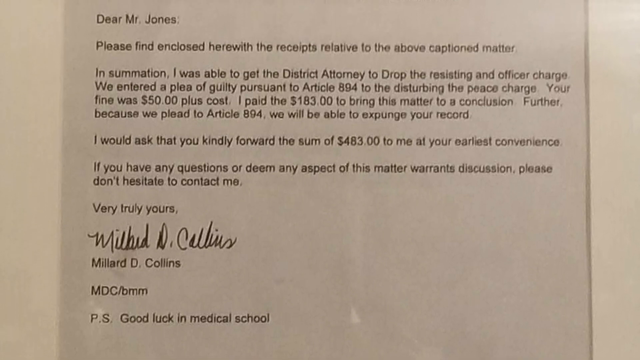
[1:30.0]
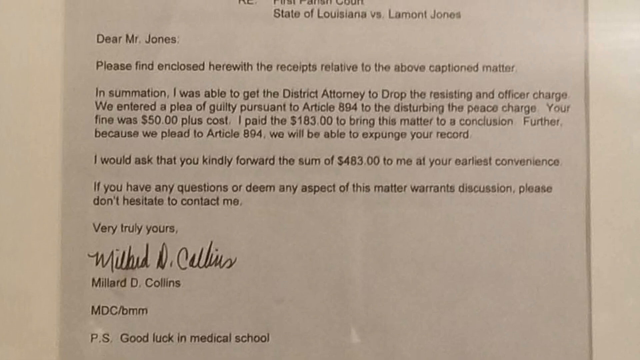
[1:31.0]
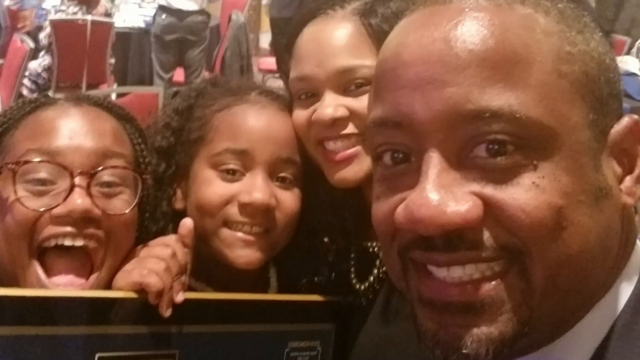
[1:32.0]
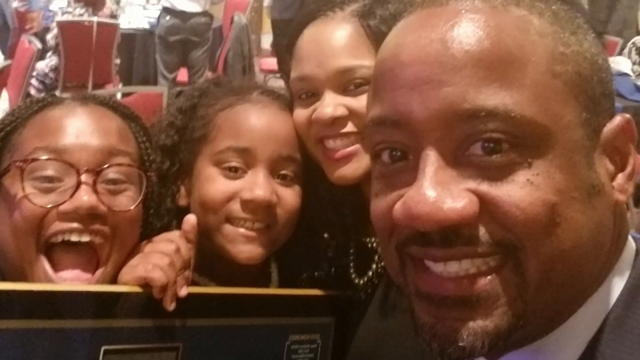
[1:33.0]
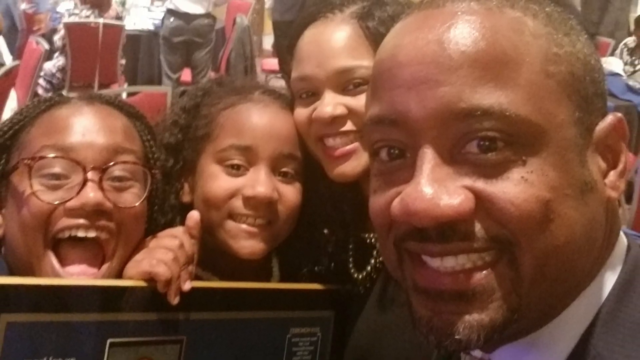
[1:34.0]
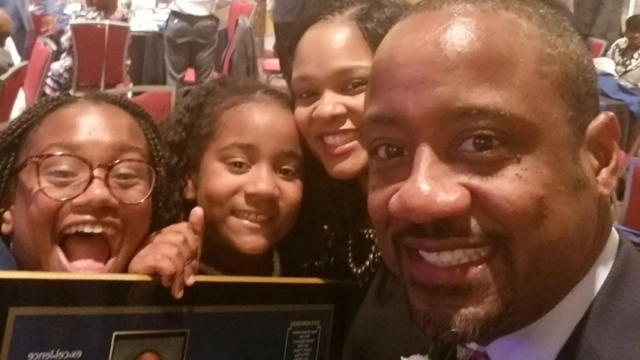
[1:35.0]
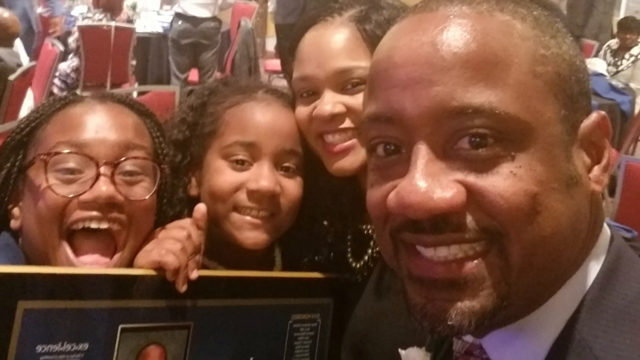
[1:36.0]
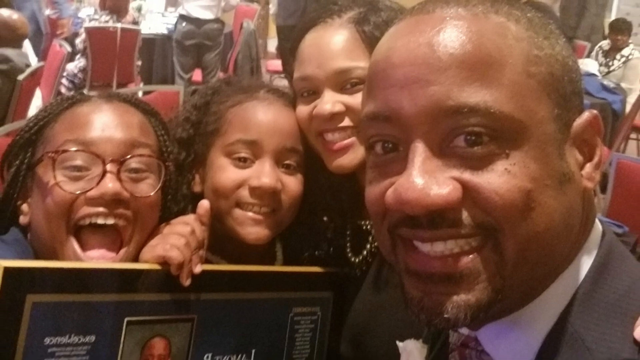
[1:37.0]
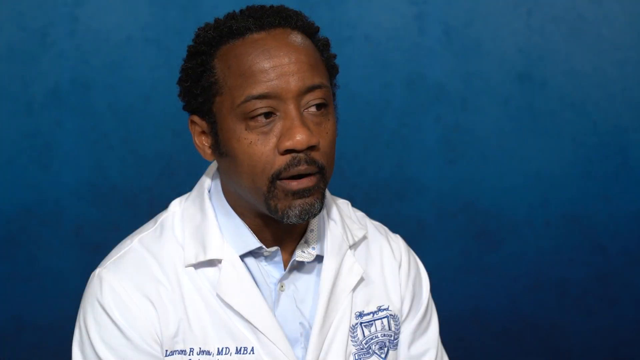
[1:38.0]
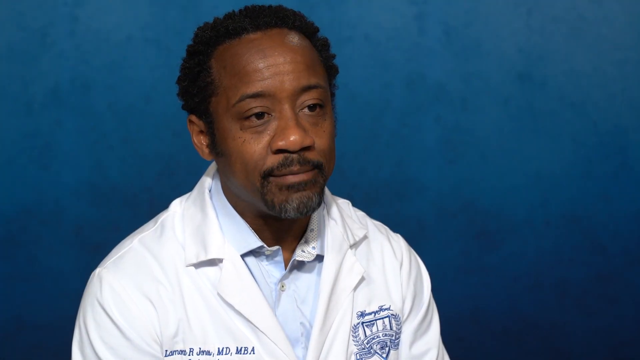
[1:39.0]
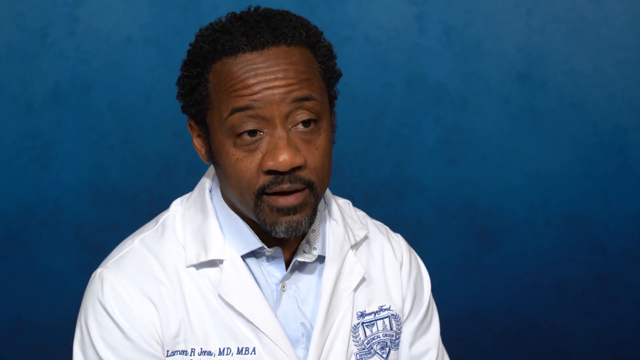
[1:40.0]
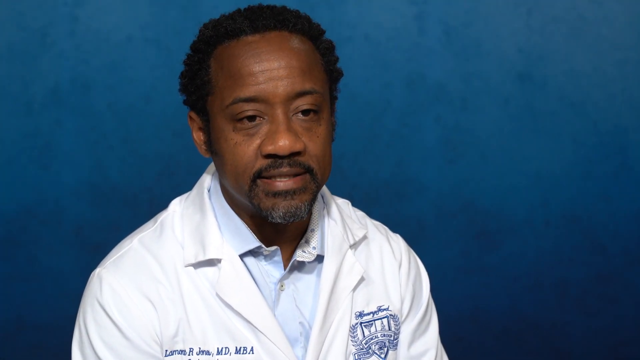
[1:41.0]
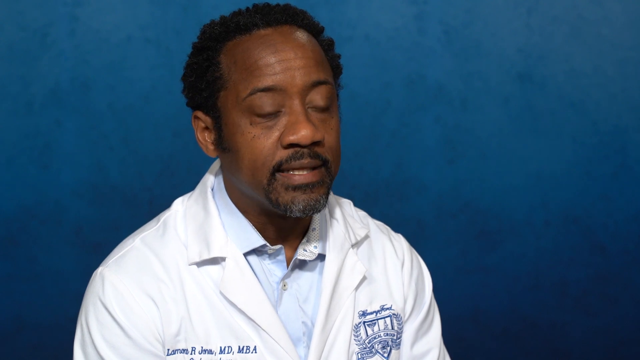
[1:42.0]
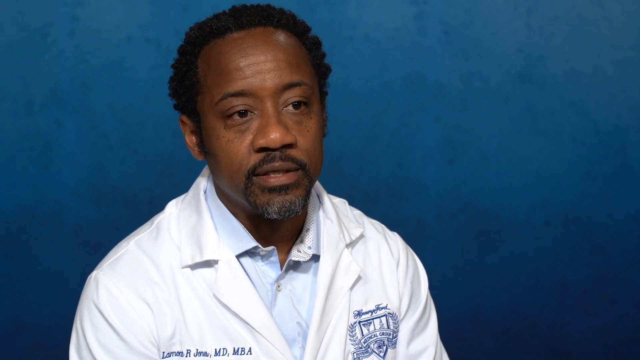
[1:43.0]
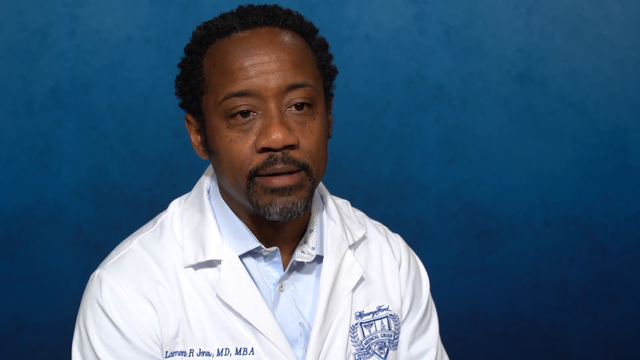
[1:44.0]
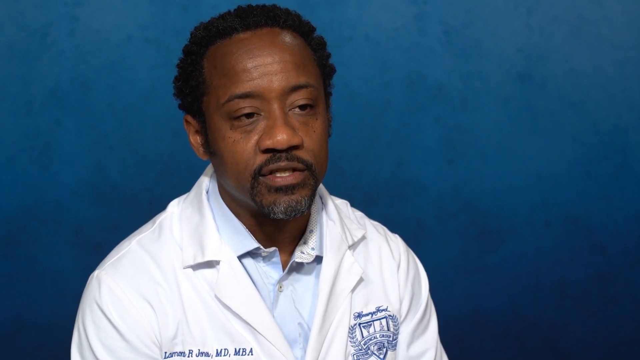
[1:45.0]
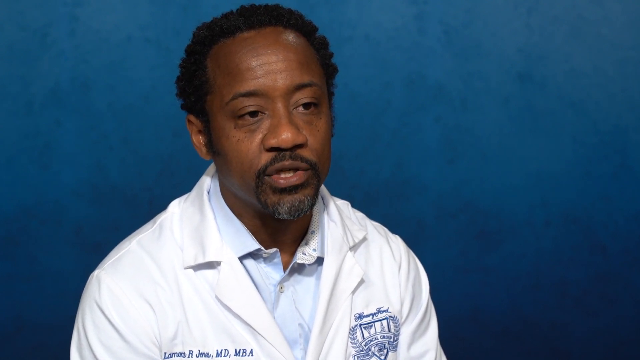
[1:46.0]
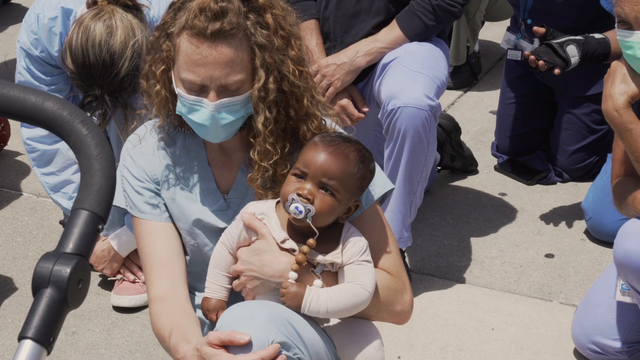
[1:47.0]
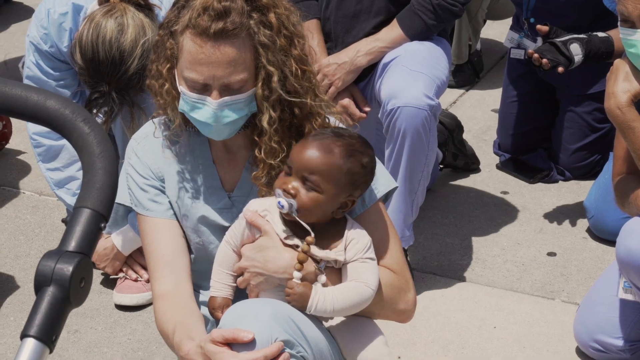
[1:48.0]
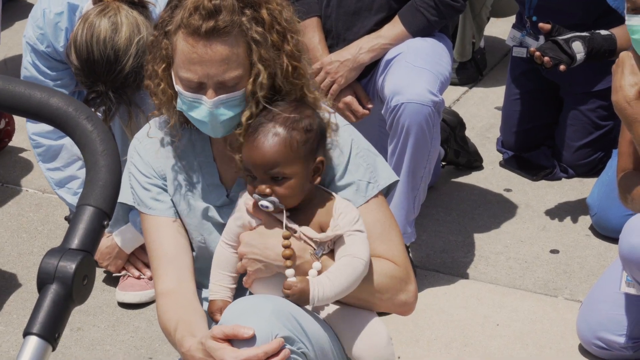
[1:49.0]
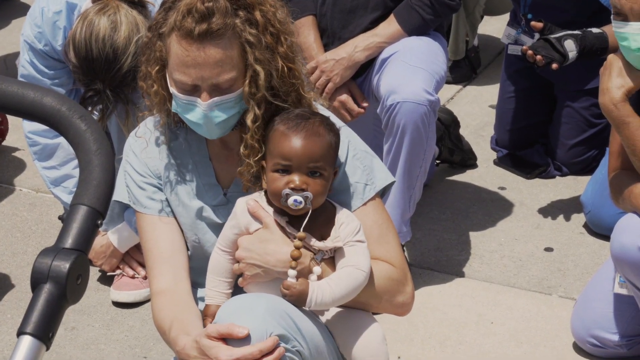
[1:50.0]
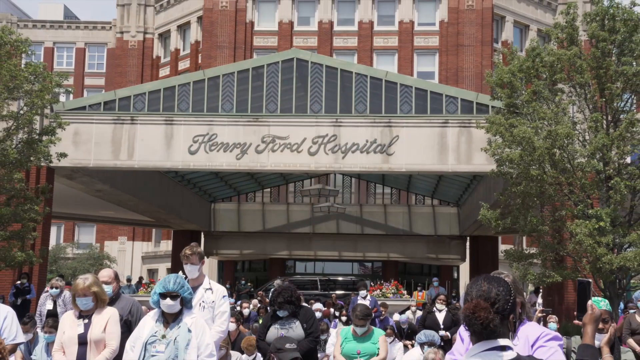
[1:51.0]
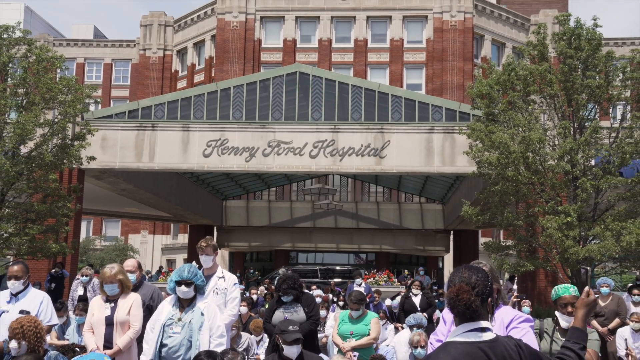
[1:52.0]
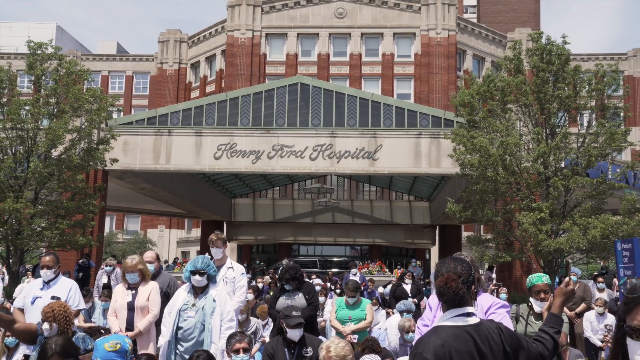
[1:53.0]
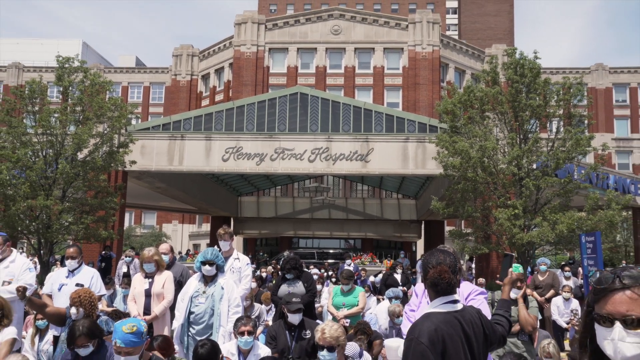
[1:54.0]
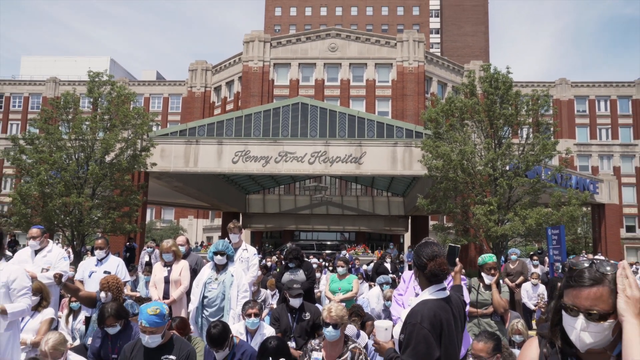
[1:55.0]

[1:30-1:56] A close-up shows a letter addressed to Lamont Jones and signed by Millard D. Collins, stating that charges against him are going to be expunged. Next is a close-up of a photograph of four people: a man on the right side, a woman slightly behind him, and two young girls on the left. They are smiling very happily, and one of them appears to be holding up a plaque of some kind. The scene switches to a man sitting in front of a blue backdrop, wearing a white doctor's coat and speaking to someone off camera. The name "Lamont R. Jones, M.D., M.B.A." is embroidered on the front of the coat. Then a group of people kneel outside as if in prayer. In the foreground, a woman wearing a surgical mask holds a baby on her lap. The scene switches to the front of a large red brick building, where a sign on the front of a portico reads "Henry Ford Hospital," and a large crowd of people is assembled in front of the building.